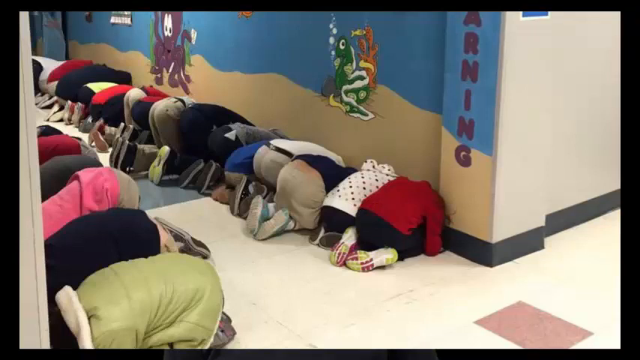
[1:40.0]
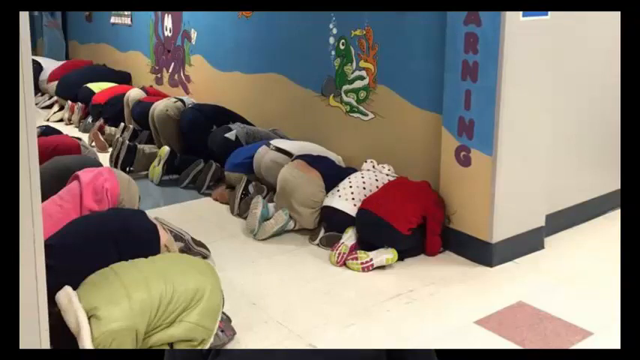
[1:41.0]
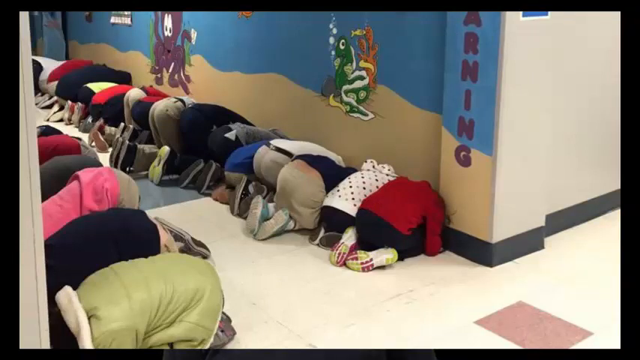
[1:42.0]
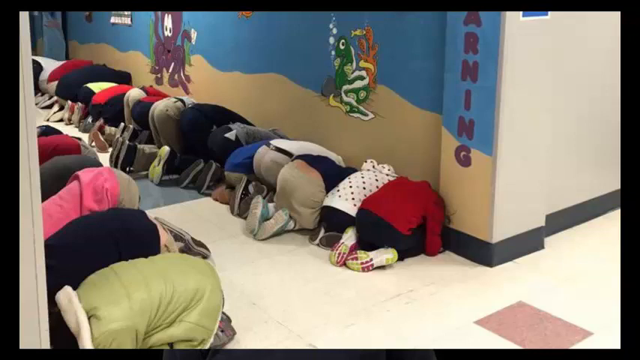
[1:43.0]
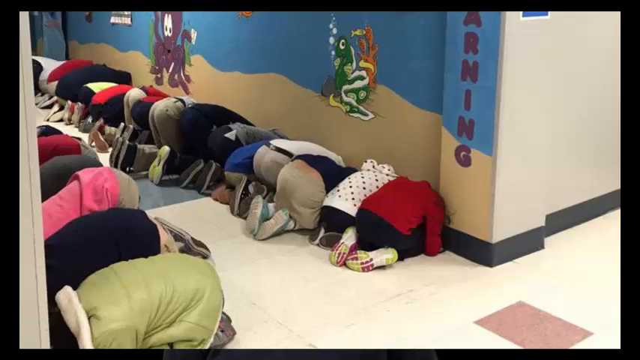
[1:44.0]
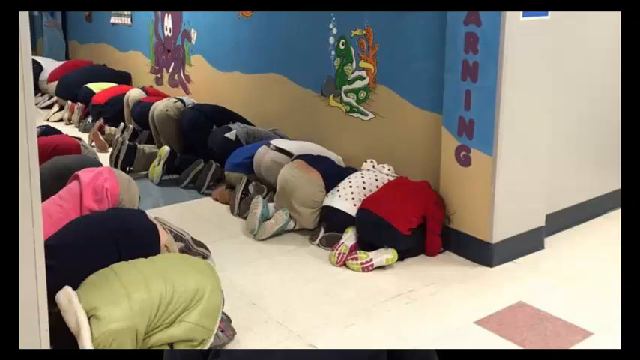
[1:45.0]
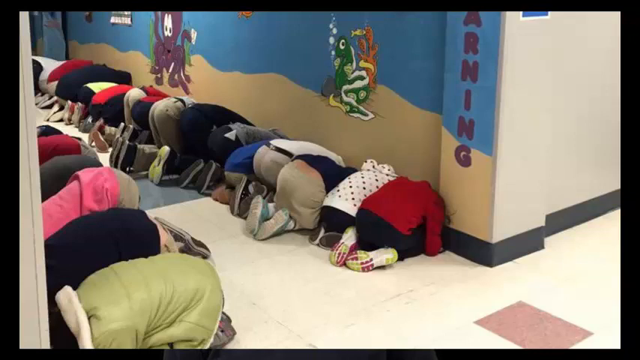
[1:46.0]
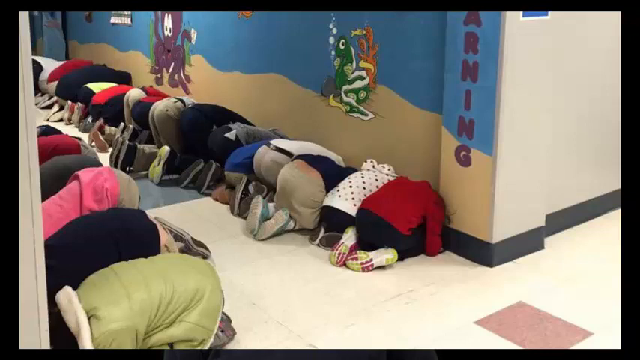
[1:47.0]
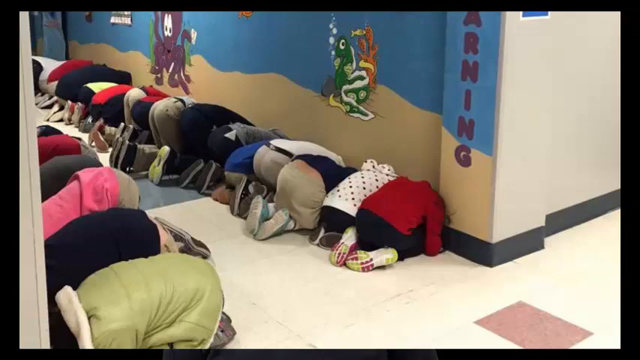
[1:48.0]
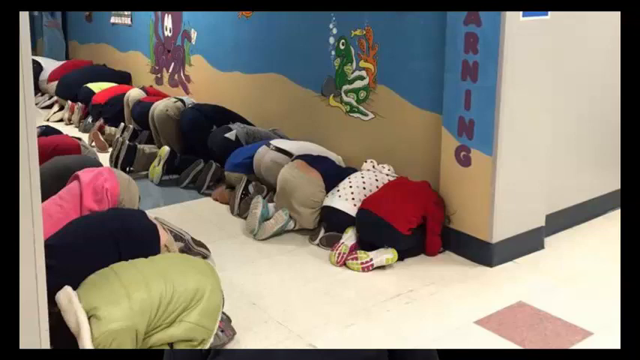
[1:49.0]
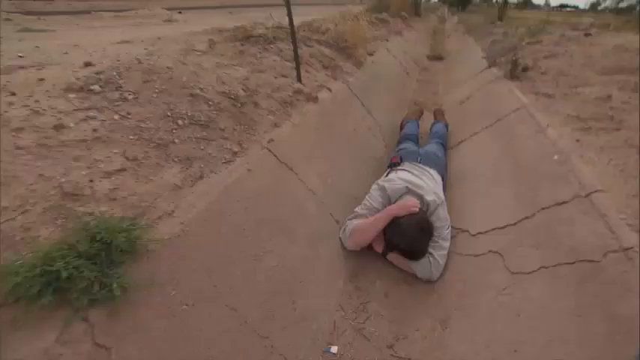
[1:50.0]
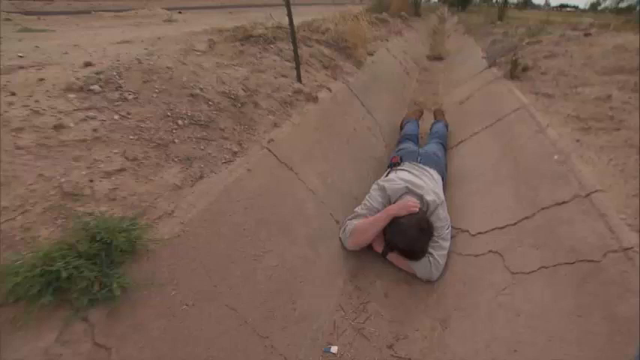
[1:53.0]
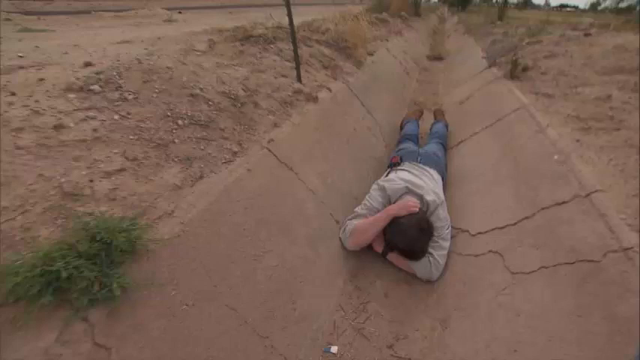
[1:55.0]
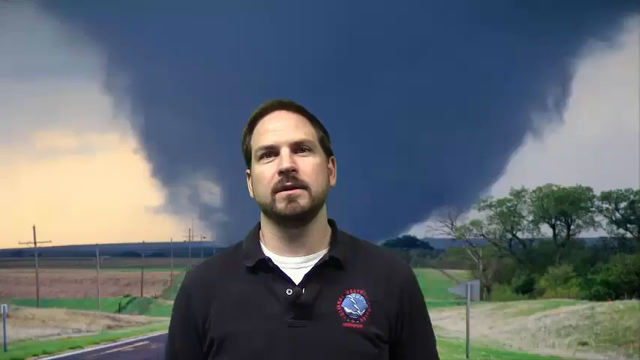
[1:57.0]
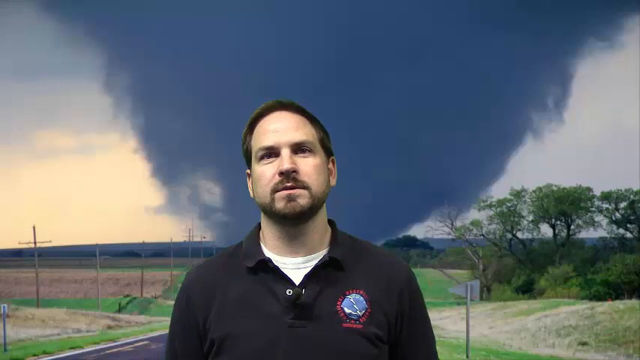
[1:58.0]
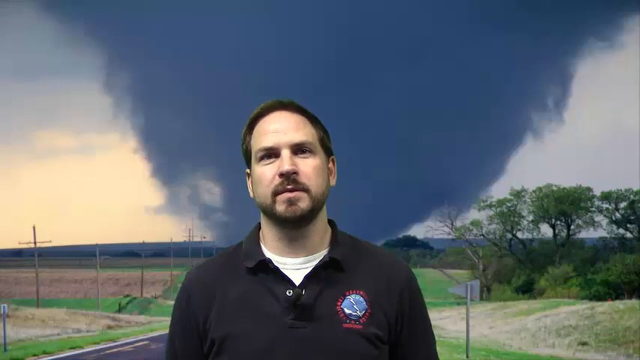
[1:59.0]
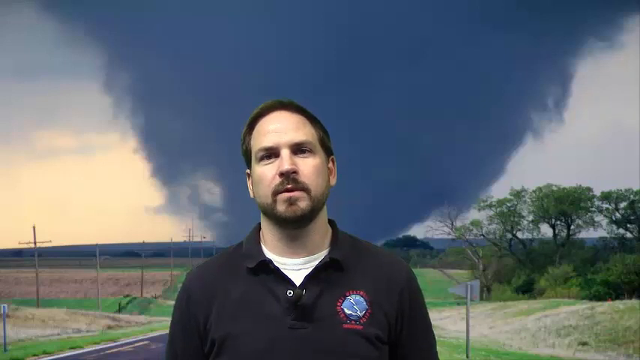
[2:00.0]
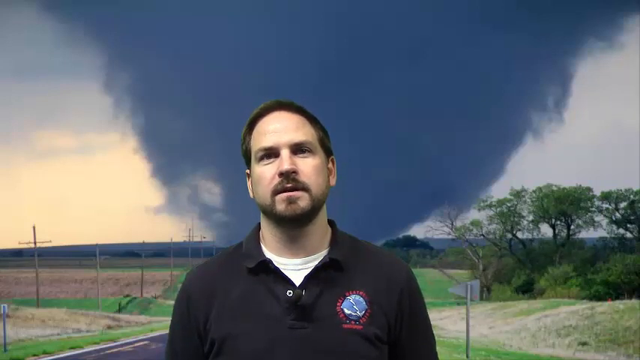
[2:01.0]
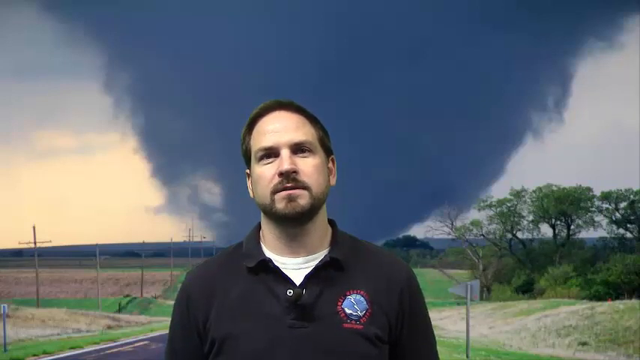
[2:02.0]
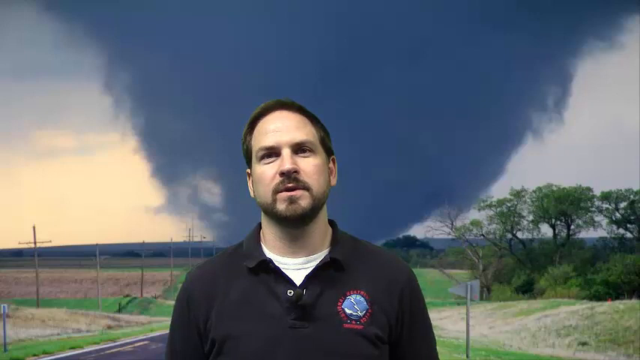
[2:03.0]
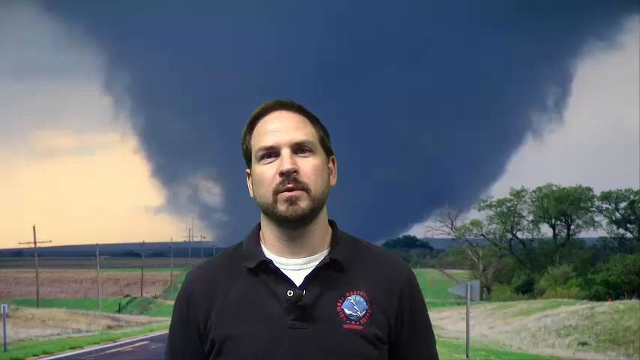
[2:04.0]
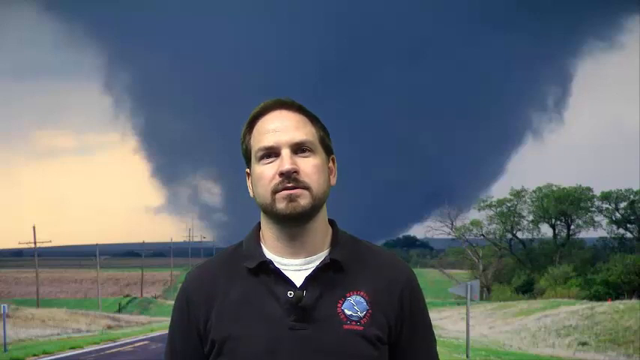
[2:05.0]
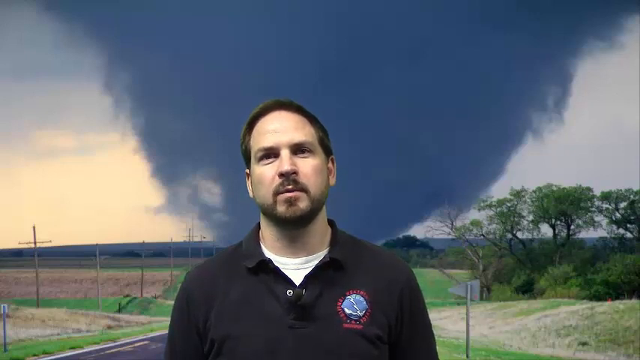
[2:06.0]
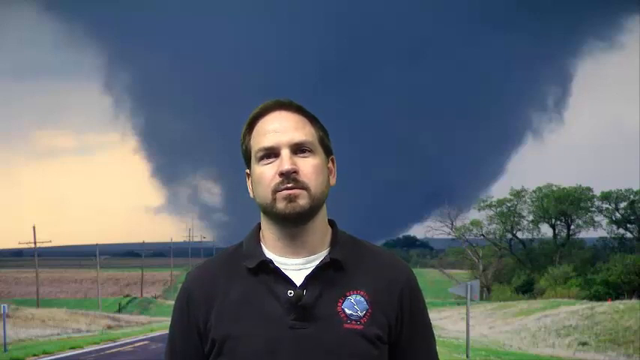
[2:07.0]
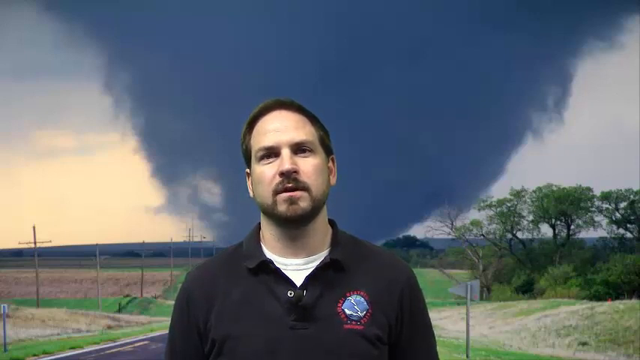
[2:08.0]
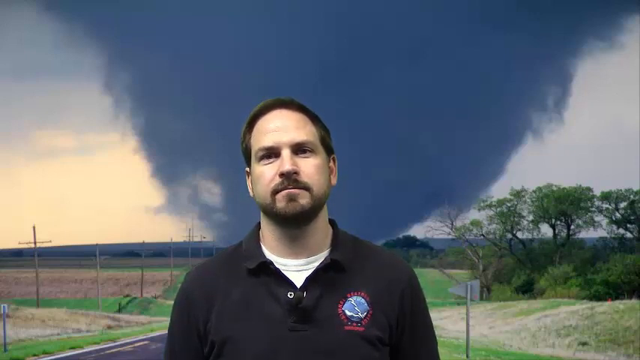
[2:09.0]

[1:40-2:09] Administrators protect themselves in a central hallway of a school. They are in a fetal position with their backs to the sky, heads tucked into their chests as far as possible and arms wrapped around their heads, and they seem to be using the walls to protect their heads as well. Images in the hallway indicate that this is probably an elementary school, and they are definitely in the hallway. The video cuts to an image of a man lying as flat as he can in a ditch, legs extended all the way, with one arm wrapped around his face and the other around the back of his head, protecting himself from flying debris. The ditch looks paved and is surrounded by dirt; it could be on a roadside. He keeps his head down to the ground as far as he can. The video then cuts back to the man in the black collared shirt in front of the green screen with a tornado behind him. He speaks to the camera, looking very monotone, not moving at all while talking, and staring kind of blankly above the camera view.